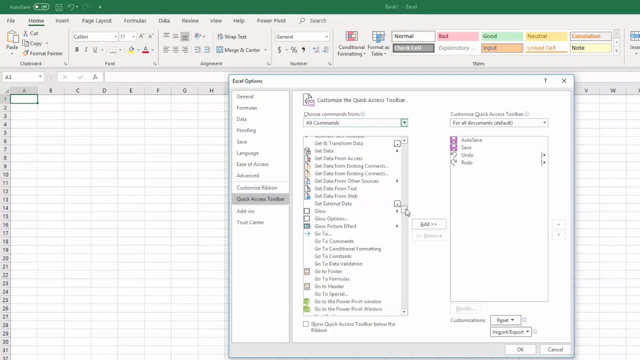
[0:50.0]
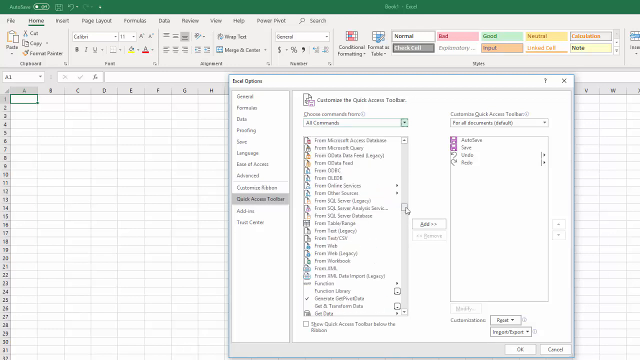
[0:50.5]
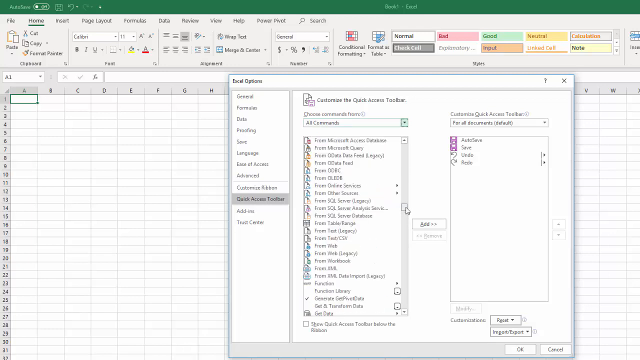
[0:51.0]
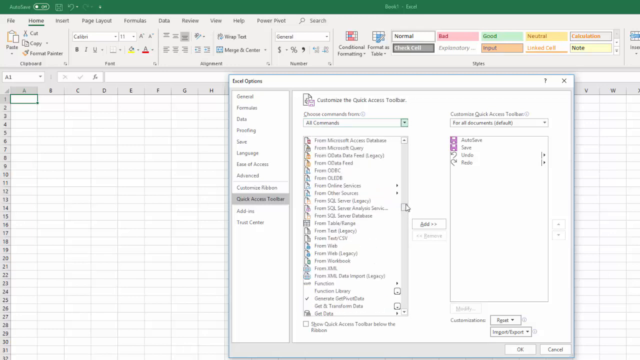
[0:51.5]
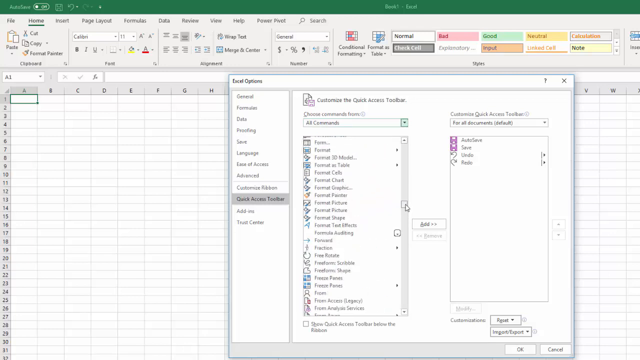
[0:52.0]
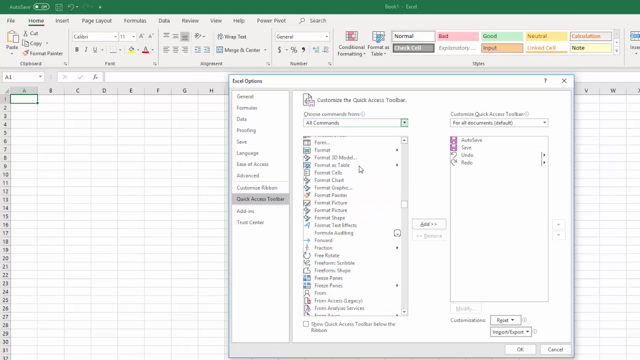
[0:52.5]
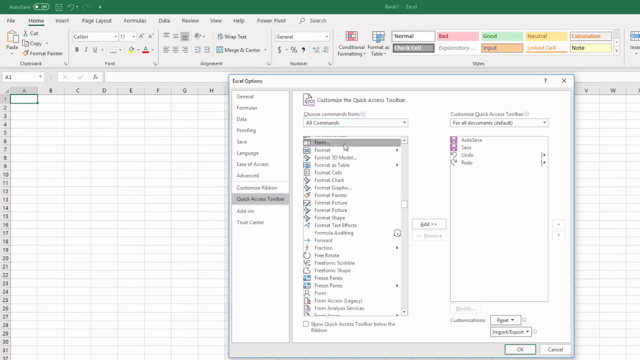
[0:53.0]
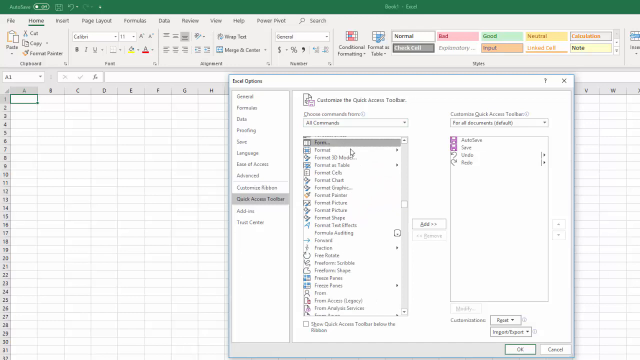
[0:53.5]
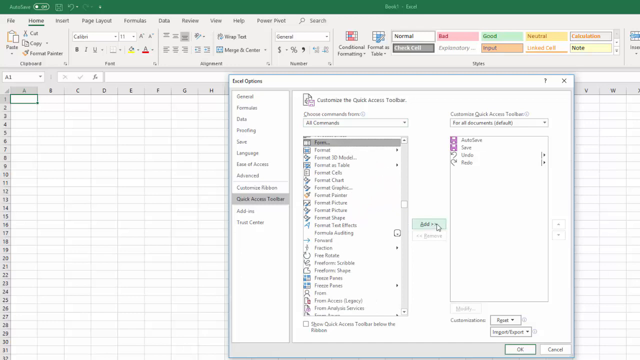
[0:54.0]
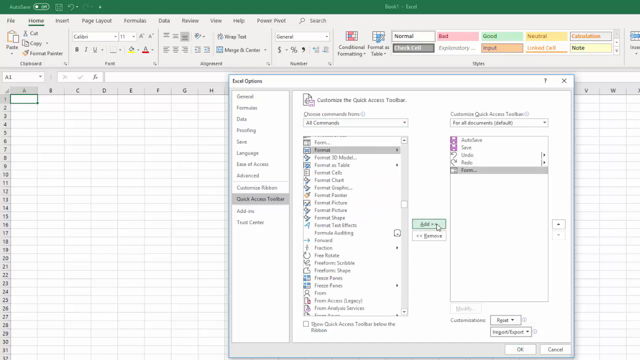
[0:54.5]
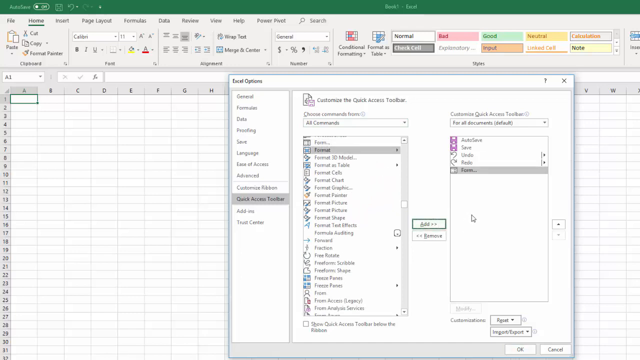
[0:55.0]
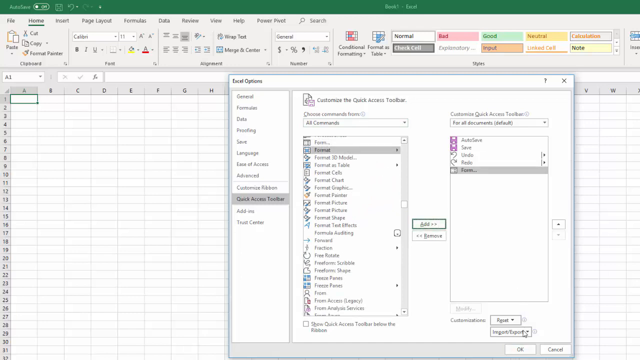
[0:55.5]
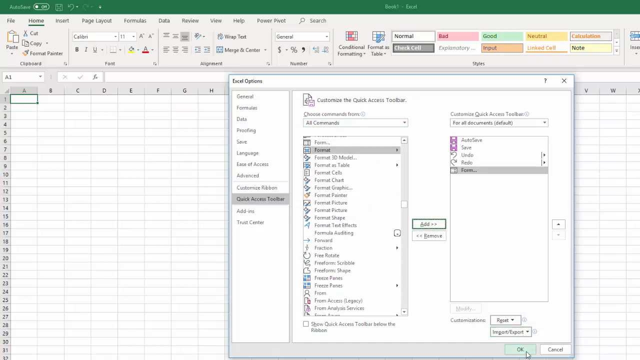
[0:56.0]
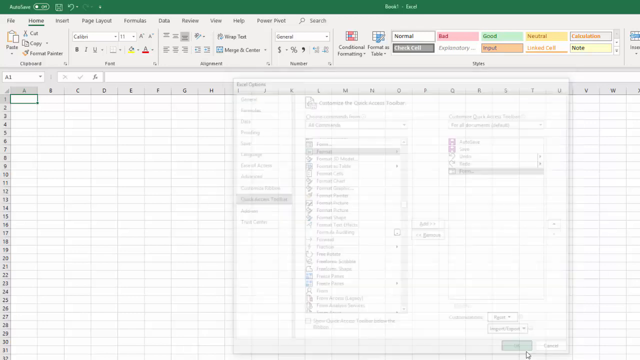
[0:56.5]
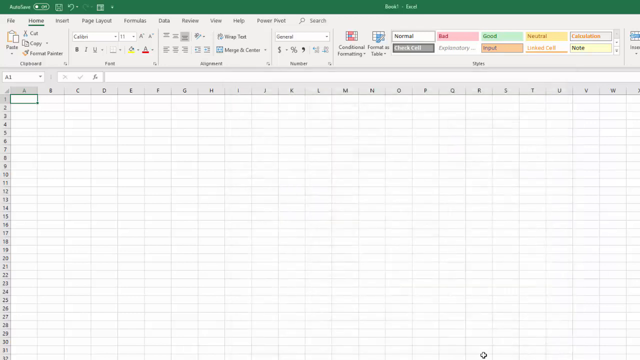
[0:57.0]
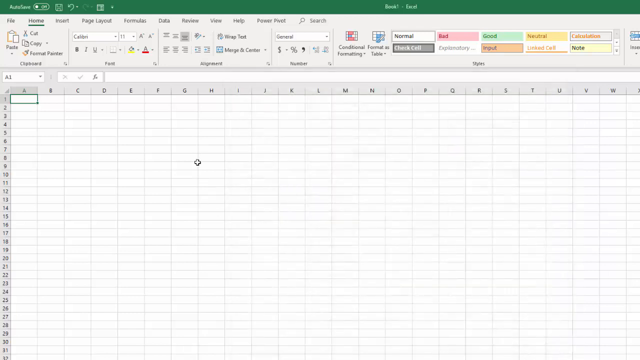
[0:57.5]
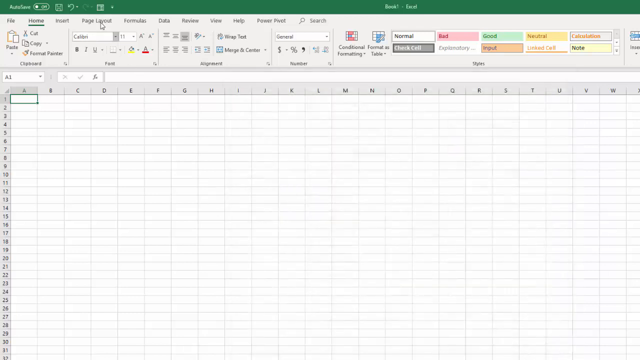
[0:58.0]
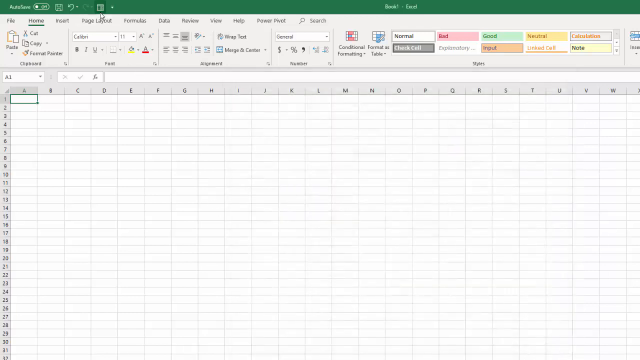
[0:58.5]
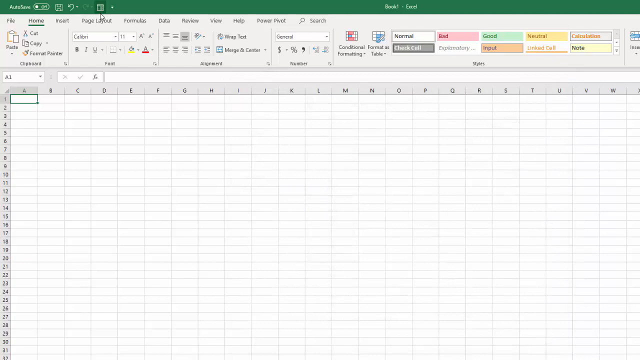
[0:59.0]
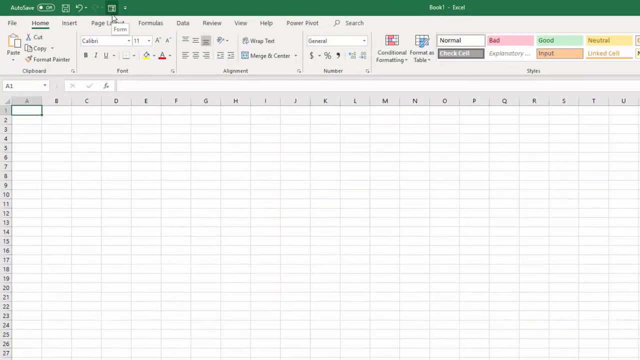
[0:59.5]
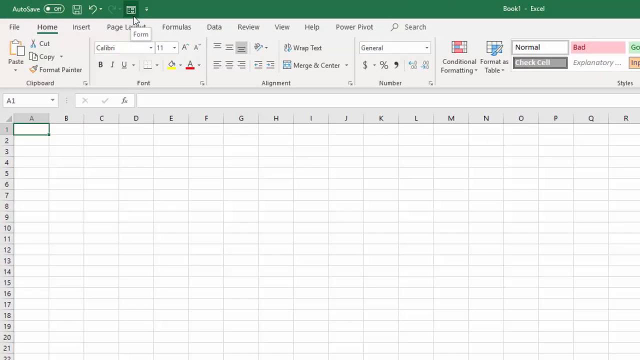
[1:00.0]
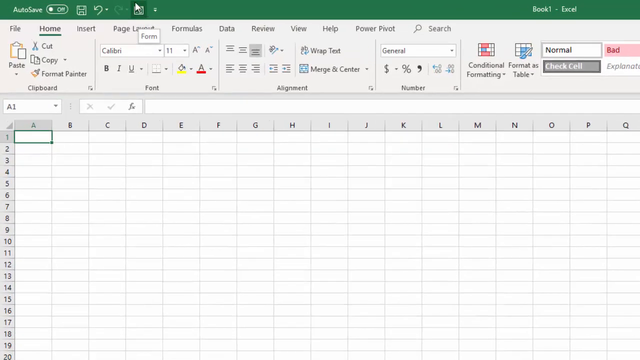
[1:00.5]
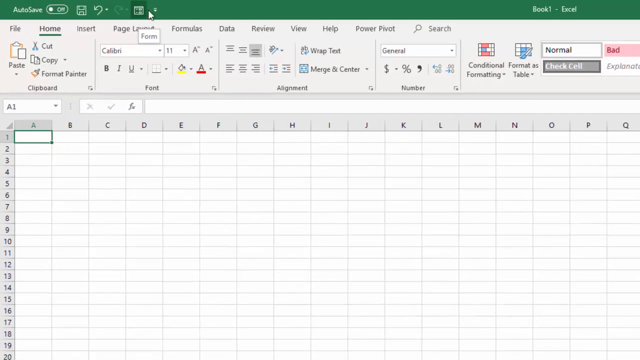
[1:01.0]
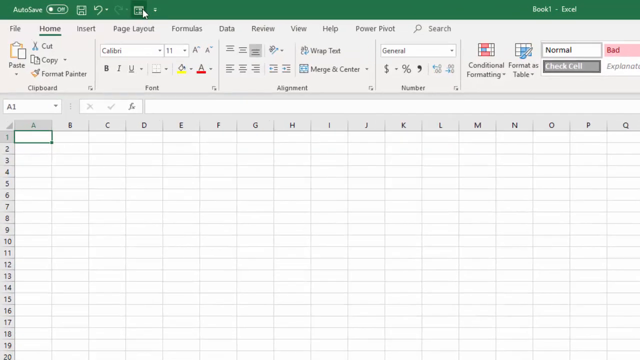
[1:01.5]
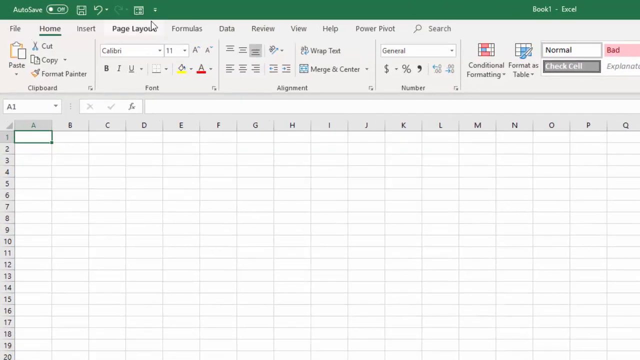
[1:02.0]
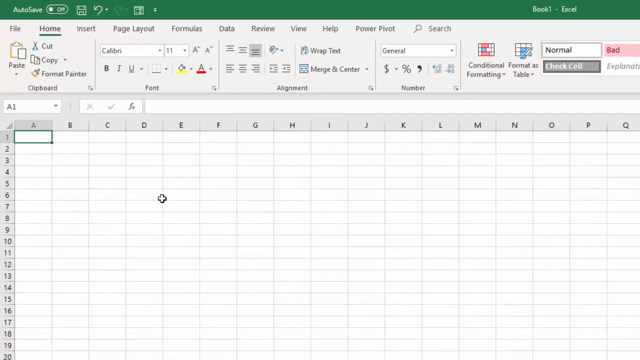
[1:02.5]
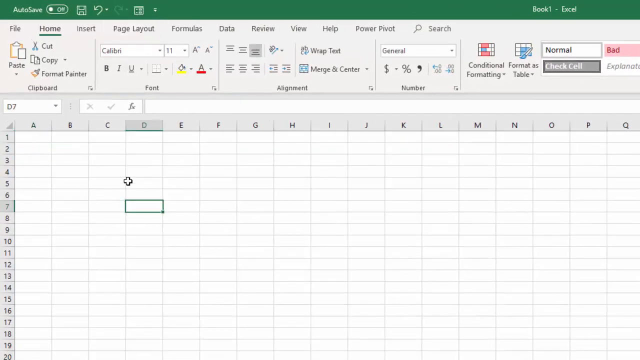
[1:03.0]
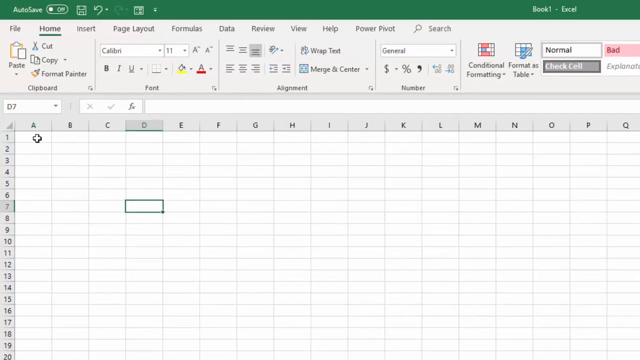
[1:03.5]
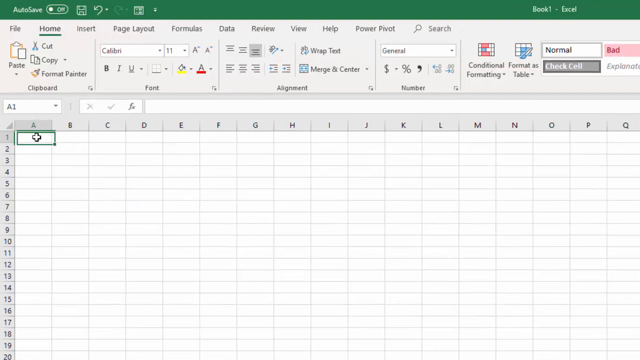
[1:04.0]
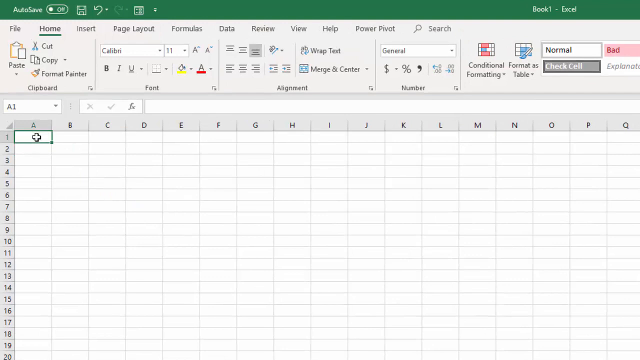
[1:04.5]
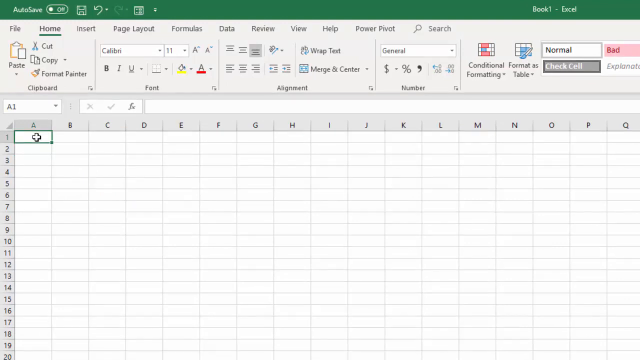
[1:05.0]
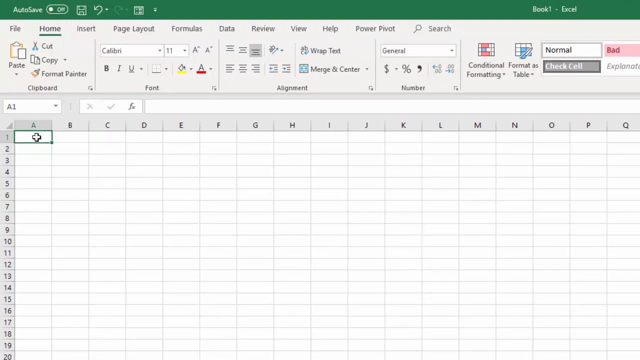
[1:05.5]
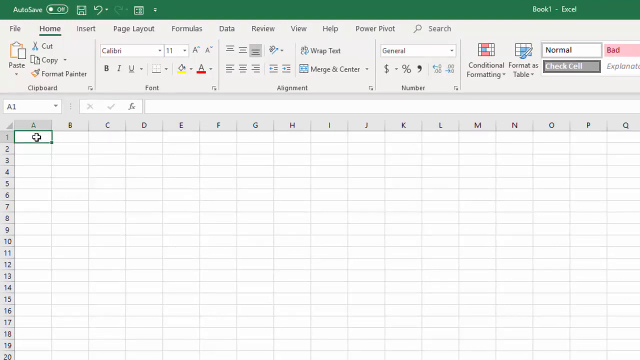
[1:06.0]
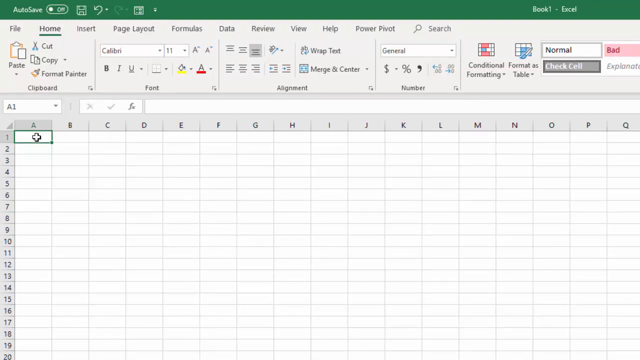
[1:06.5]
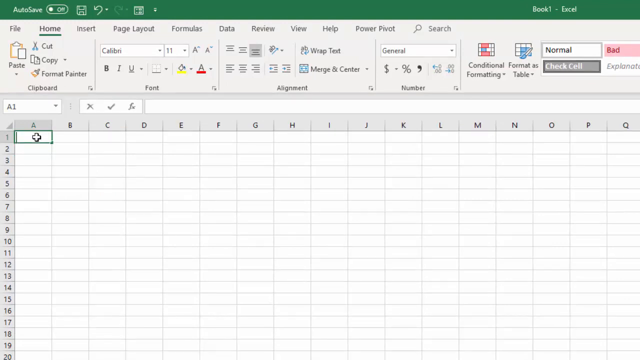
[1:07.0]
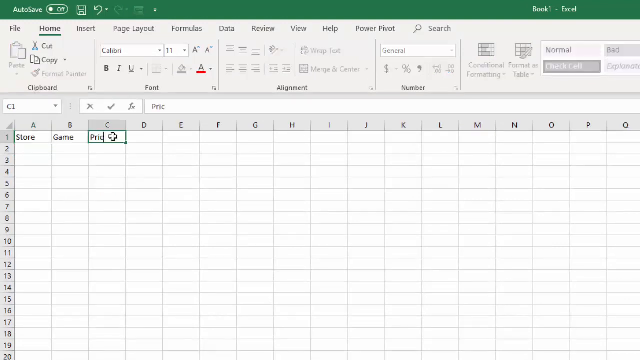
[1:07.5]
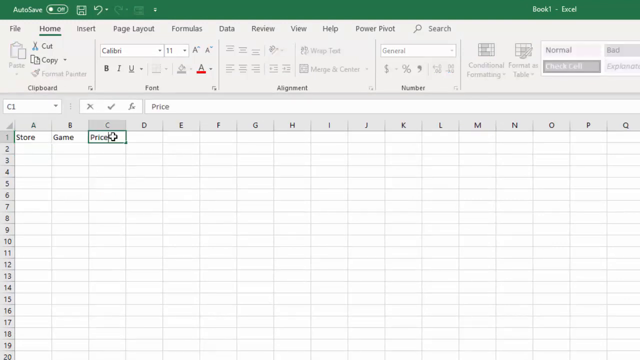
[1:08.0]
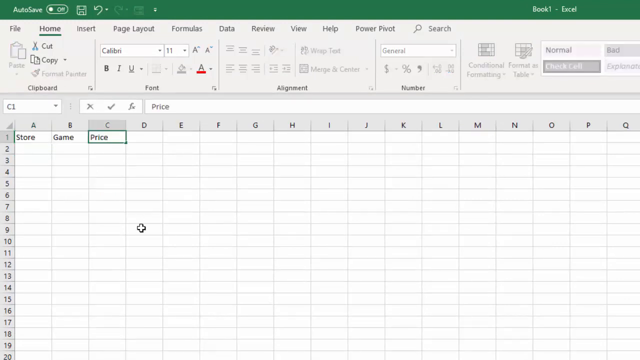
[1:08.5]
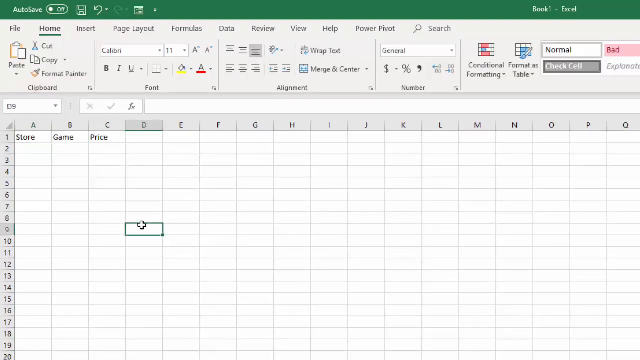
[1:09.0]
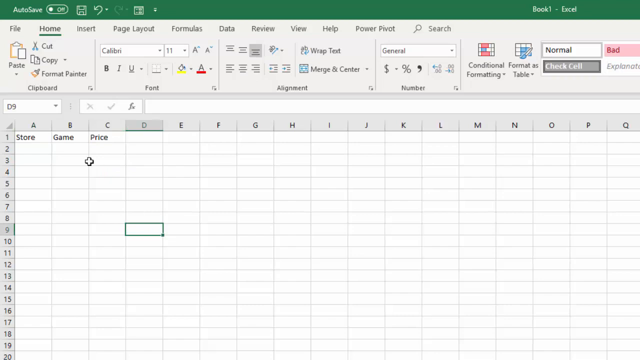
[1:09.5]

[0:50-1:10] The user keeps scrolling down the All Commands window, then clicks what seems to say "Fonts" and then what seems to say "Add." On the right is seemingly a quick path or sort of view menu listing other items in the quick access bar, such as Save, Autosave, Unfix and Redo, with the newly added Fonts shown in a gray highlight. They click OK, and the view zooms in at the top left, showing that the Fonts button has been added to the taskbar. They then click cell A1, which is highlighted, and start typing various things in A1 through A3.